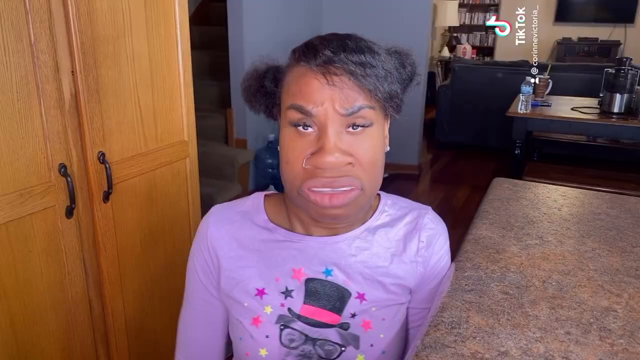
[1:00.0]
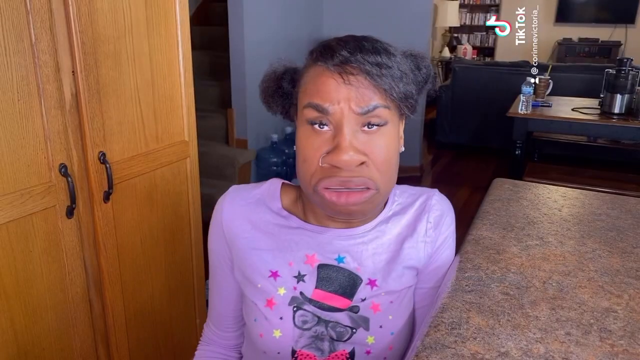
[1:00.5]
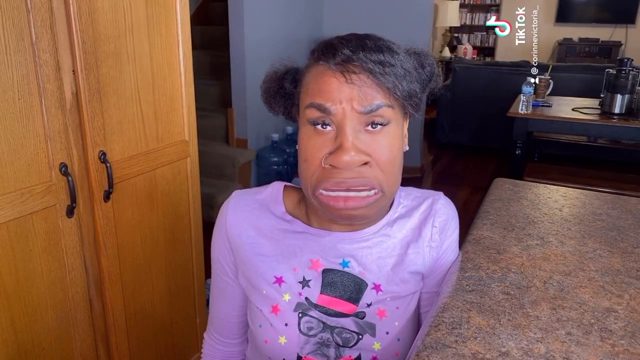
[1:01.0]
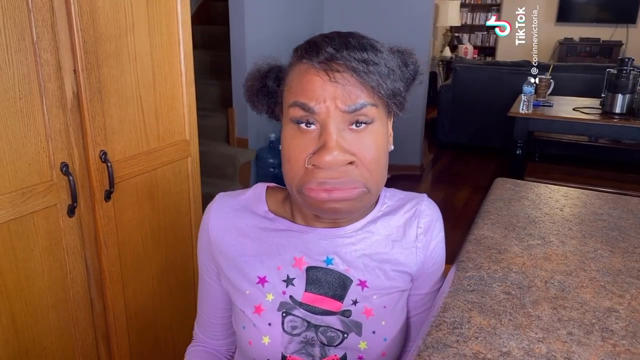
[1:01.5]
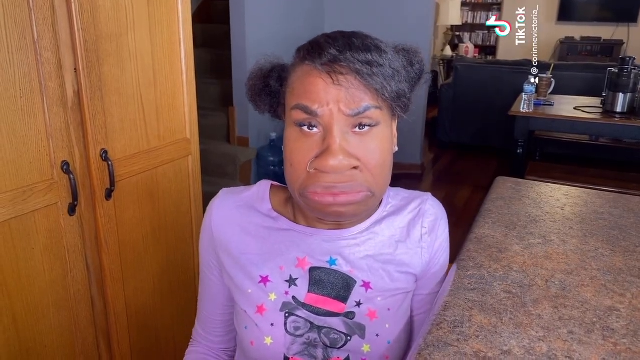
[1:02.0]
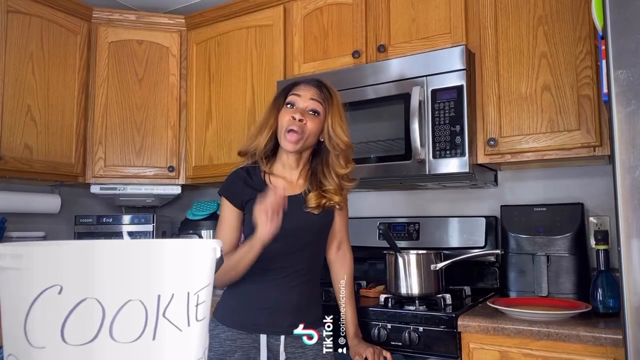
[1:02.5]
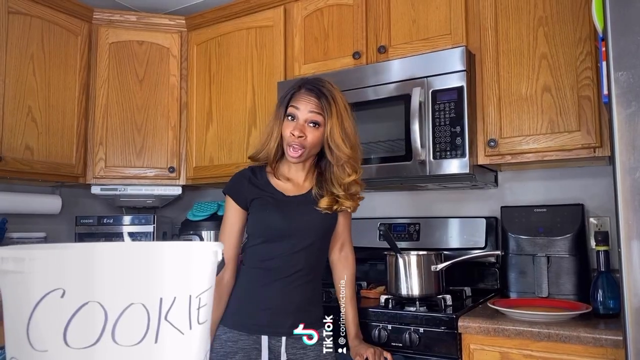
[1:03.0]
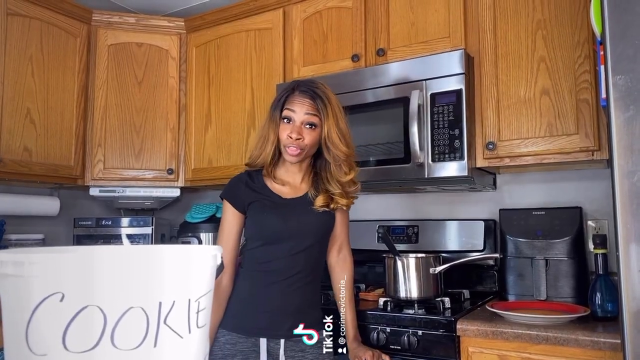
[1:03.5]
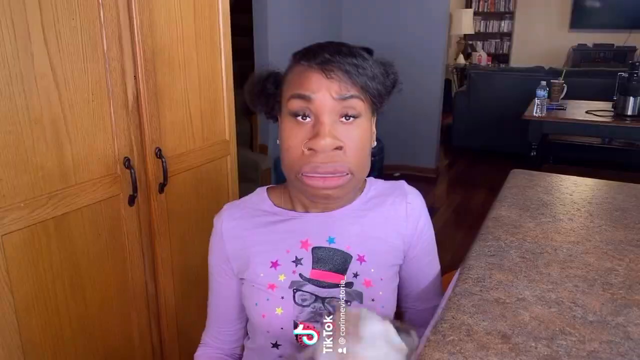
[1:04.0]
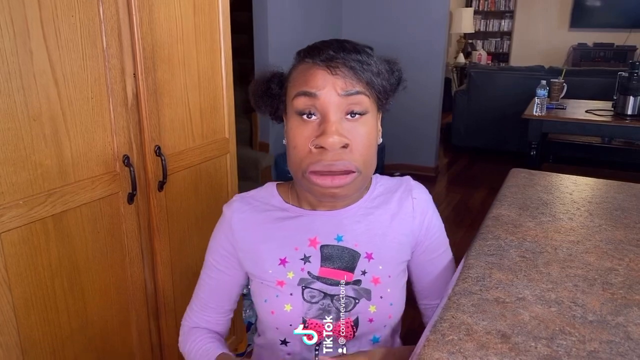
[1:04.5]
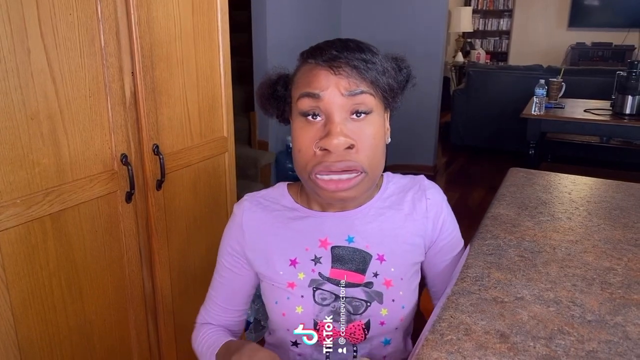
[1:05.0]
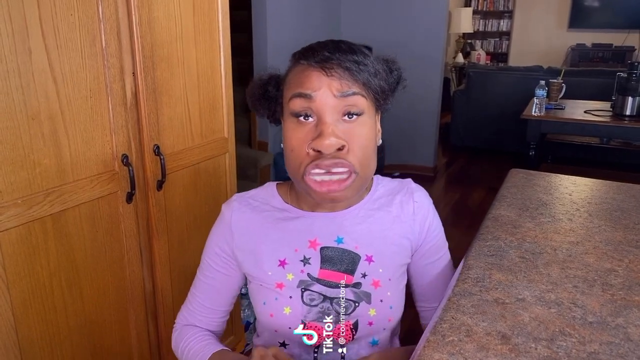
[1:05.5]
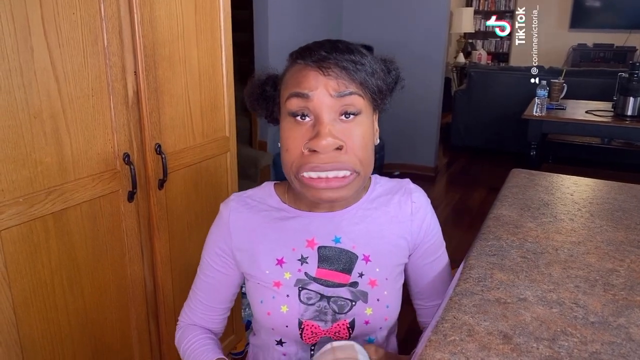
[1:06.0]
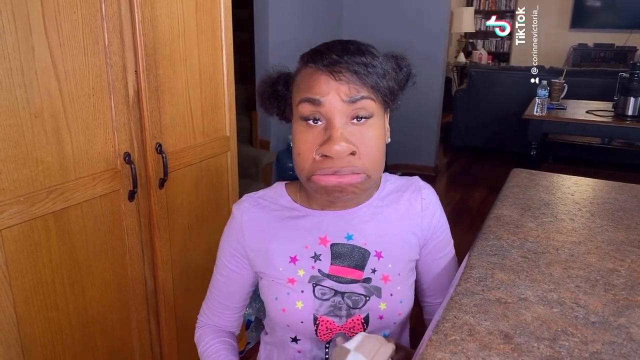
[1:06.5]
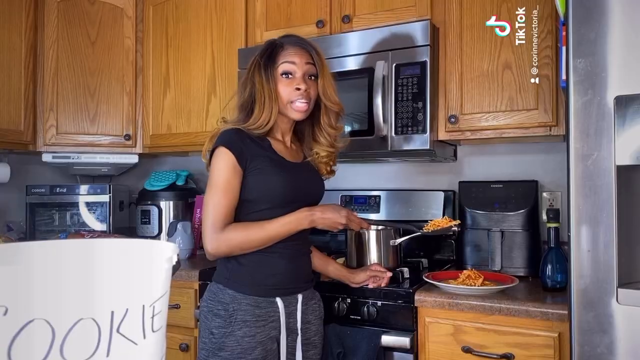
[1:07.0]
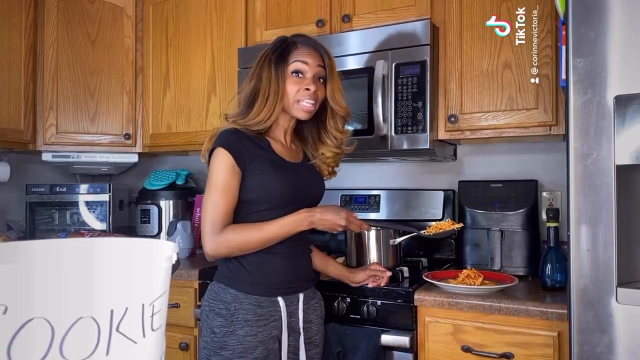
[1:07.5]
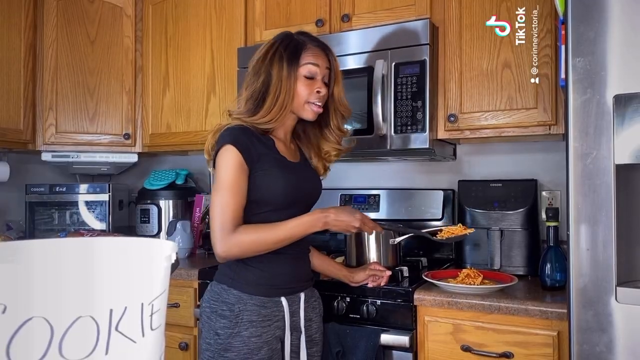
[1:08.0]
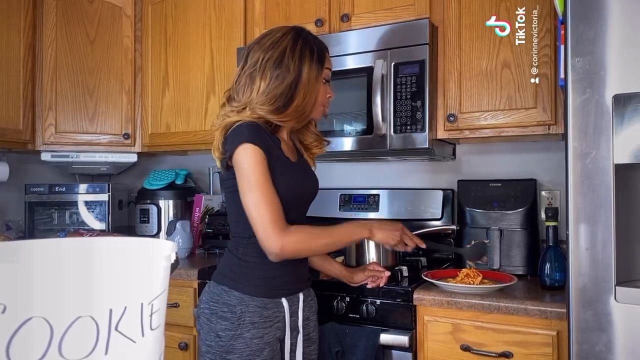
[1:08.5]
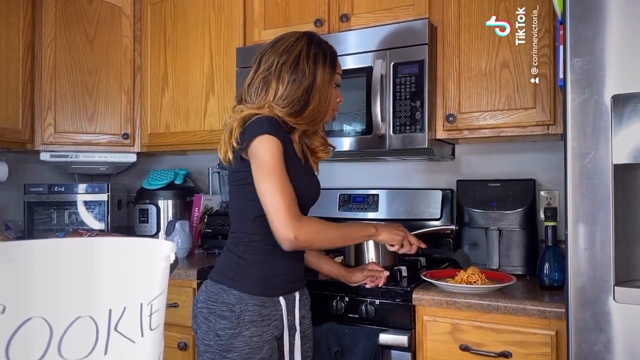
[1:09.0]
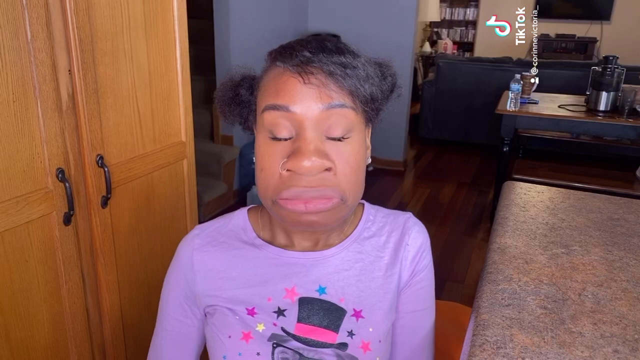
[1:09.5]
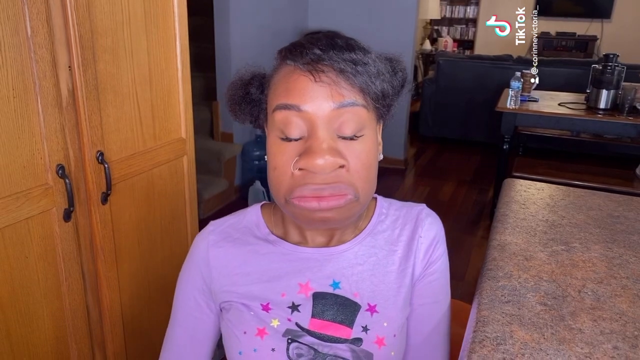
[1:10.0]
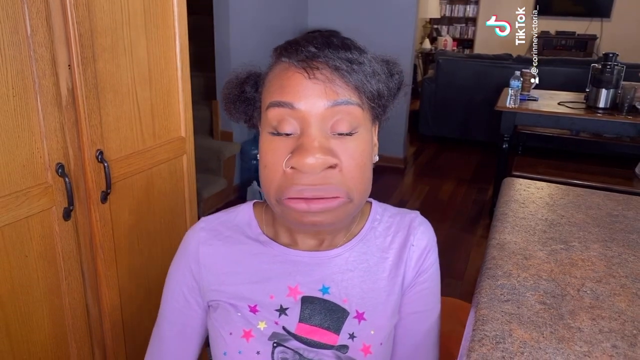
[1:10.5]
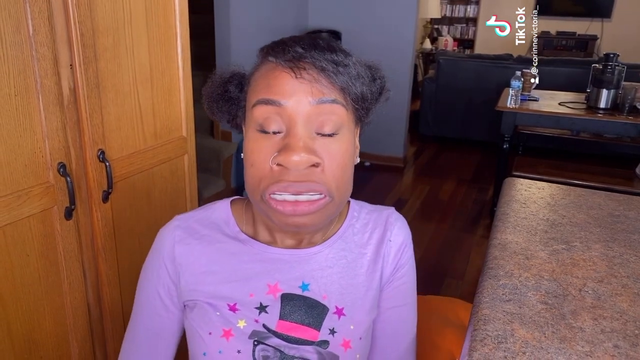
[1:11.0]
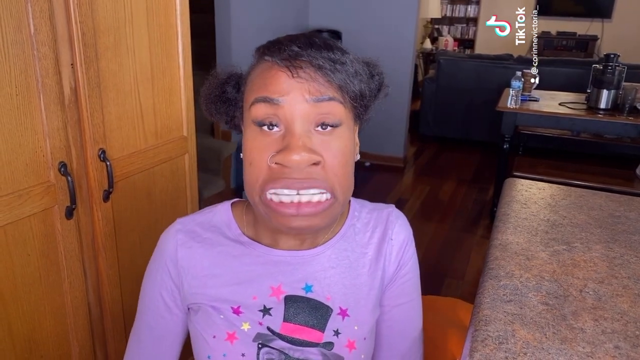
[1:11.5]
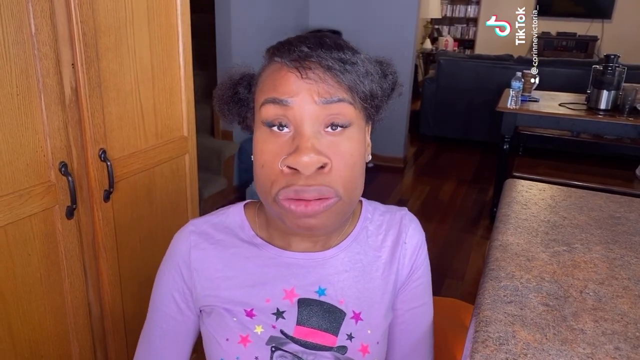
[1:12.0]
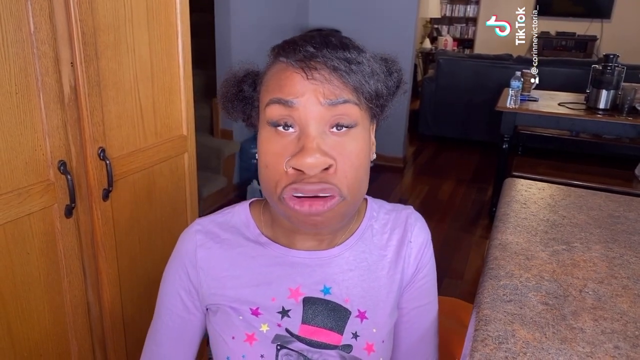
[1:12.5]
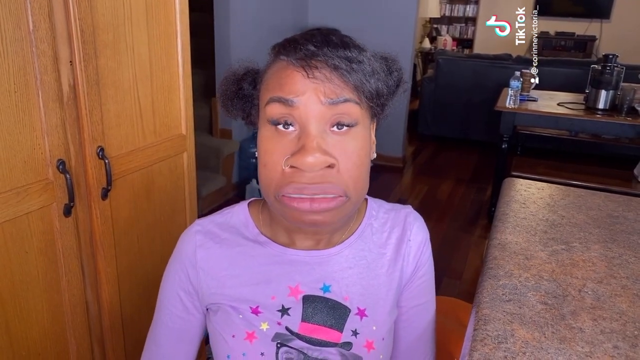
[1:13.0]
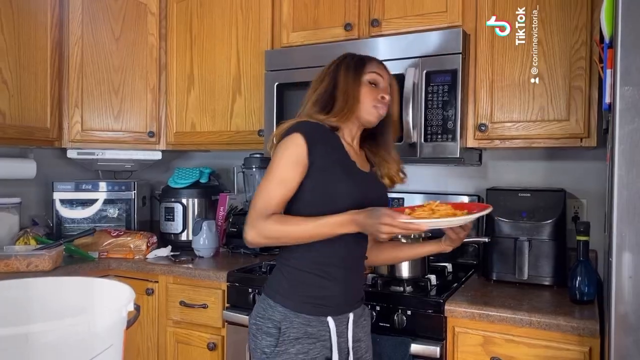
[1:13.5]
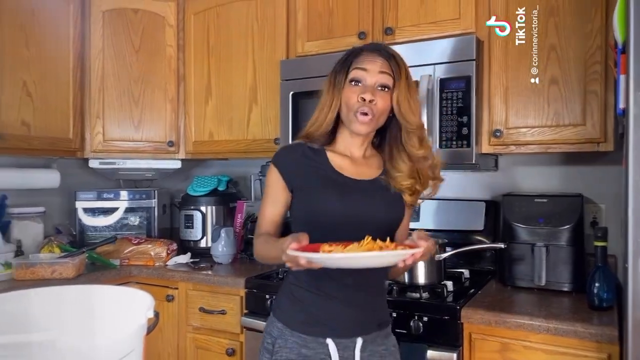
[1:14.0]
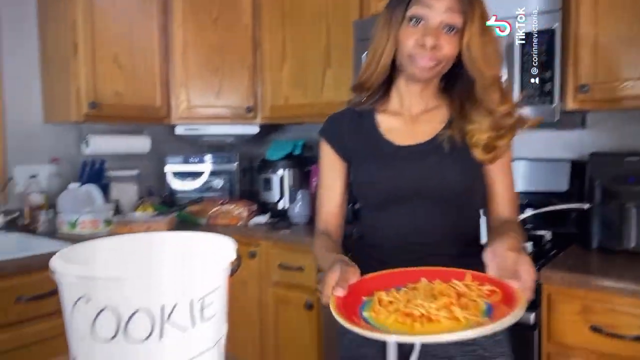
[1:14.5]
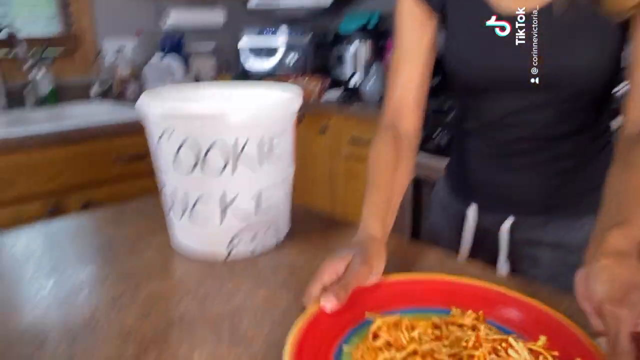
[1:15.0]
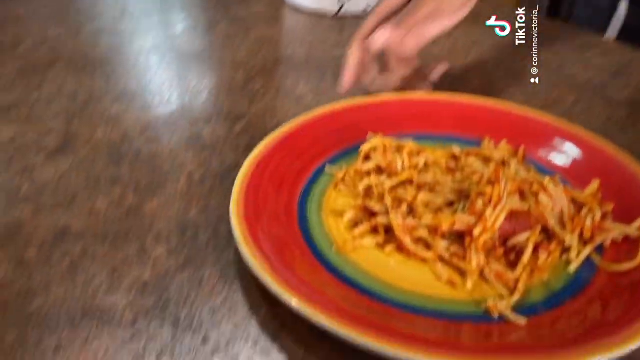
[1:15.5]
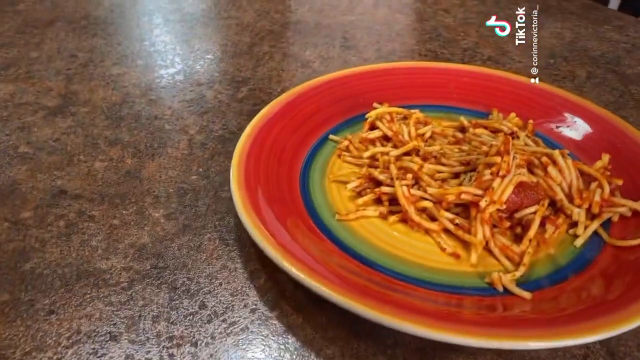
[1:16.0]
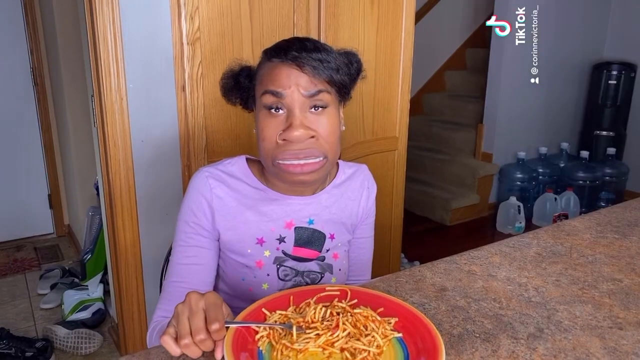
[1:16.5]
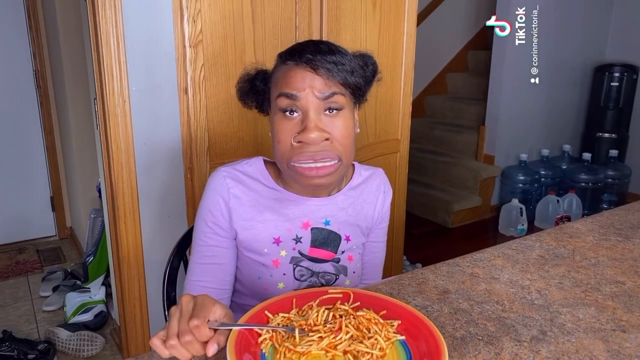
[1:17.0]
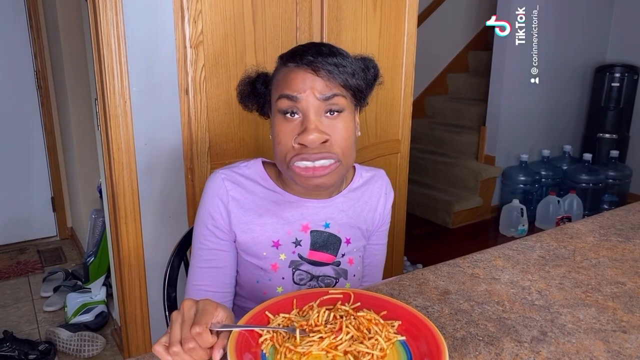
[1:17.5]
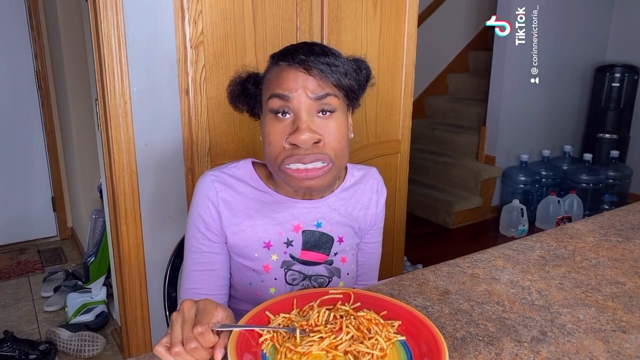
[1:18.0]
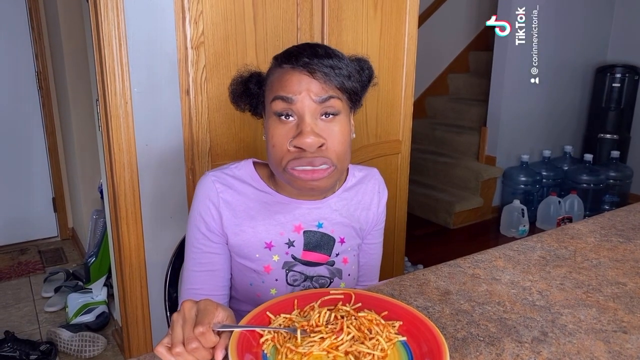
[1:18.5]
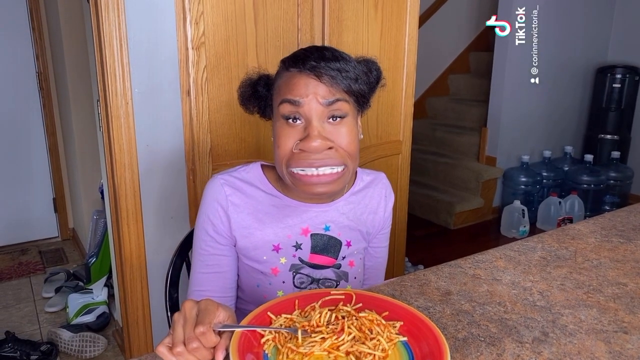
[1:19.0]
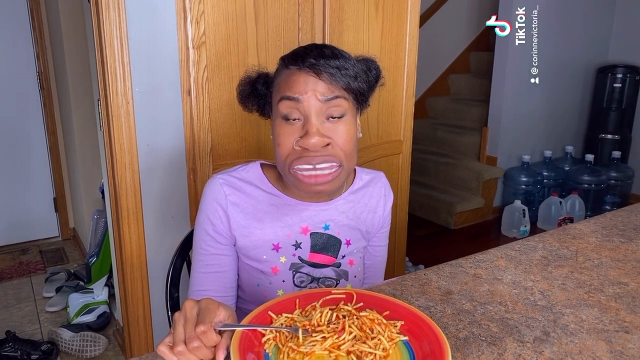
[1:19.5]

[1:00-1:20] A little girl of African-American descent with a facial filter that makes her face look very wide stands at the edge of a kitchen counter. She wears a pink or purple shirt with an image of a dog in glasses and a top hat, surrounded by colorful stars. She talks to the older woman in the kitchen, who wears tight pants and a tight shirt, has nice-looking hair, and acts confident and bossy toward her. The woman tells the girl she must eat all the potato fries on the plate or never have a cookie again, and puts the little potato fries down in front of her.